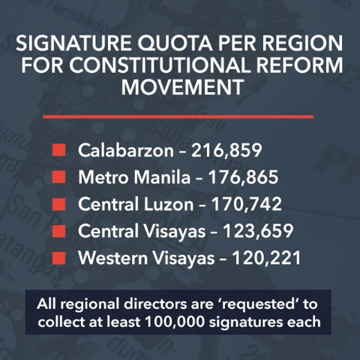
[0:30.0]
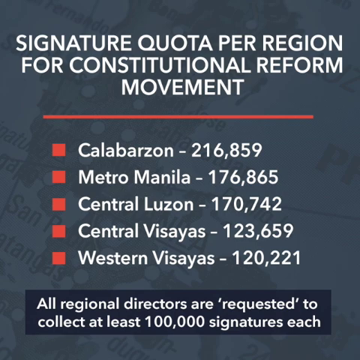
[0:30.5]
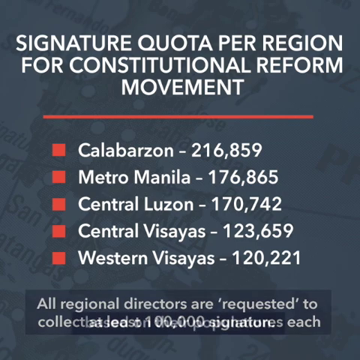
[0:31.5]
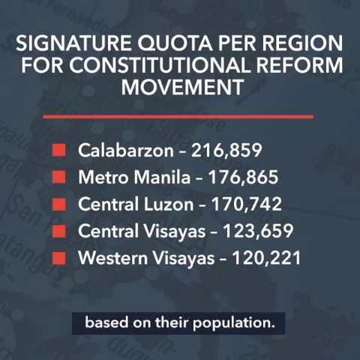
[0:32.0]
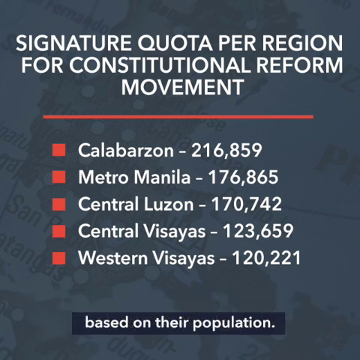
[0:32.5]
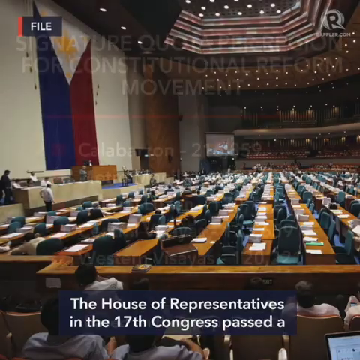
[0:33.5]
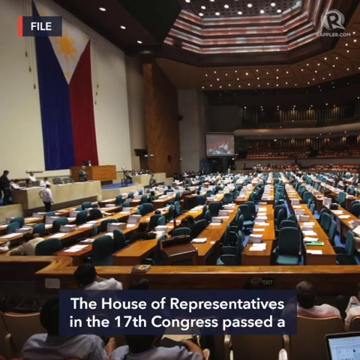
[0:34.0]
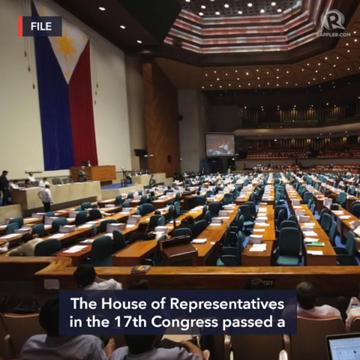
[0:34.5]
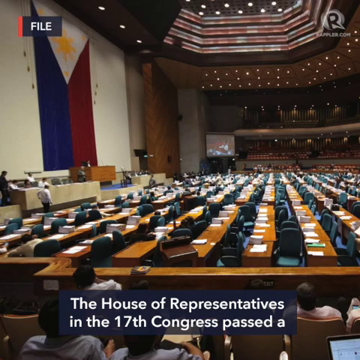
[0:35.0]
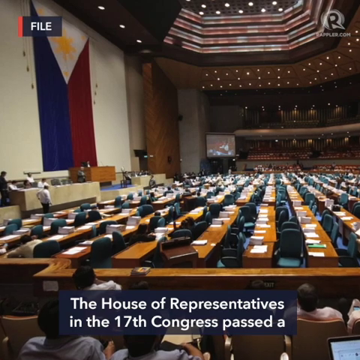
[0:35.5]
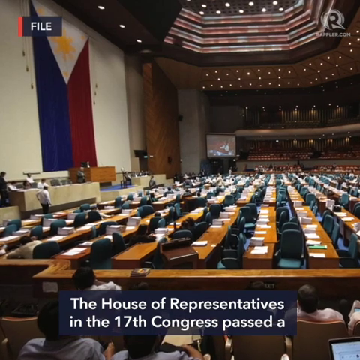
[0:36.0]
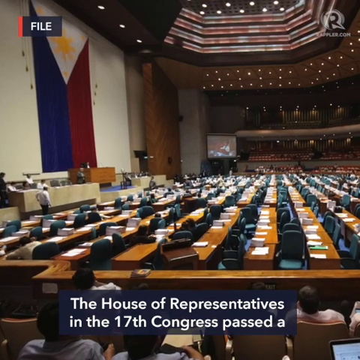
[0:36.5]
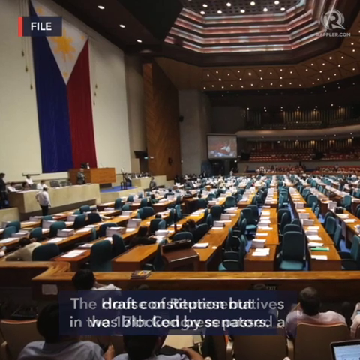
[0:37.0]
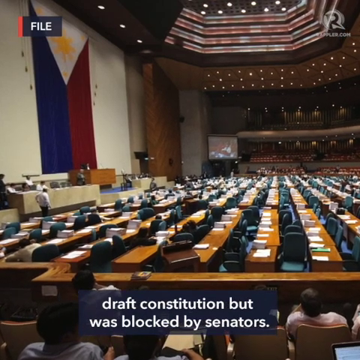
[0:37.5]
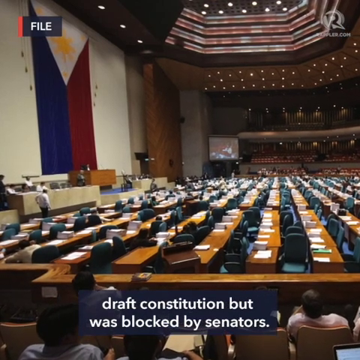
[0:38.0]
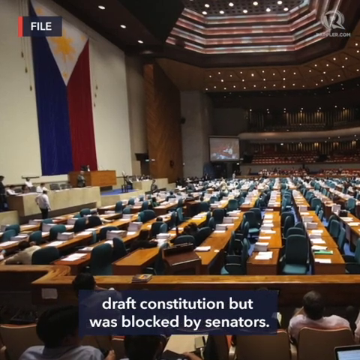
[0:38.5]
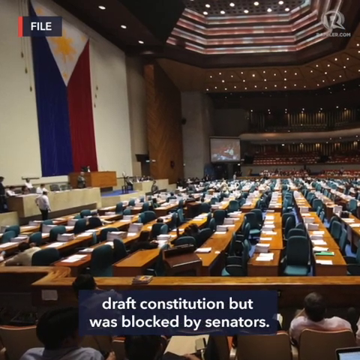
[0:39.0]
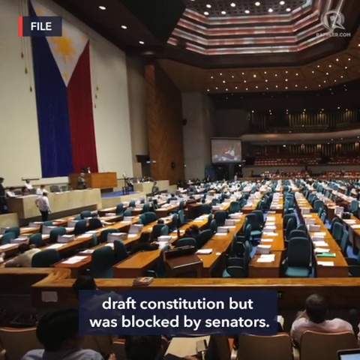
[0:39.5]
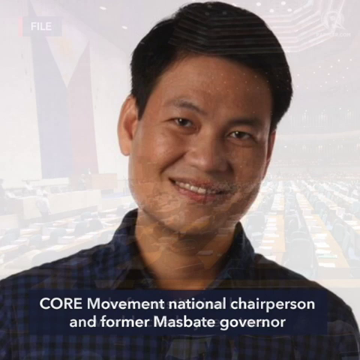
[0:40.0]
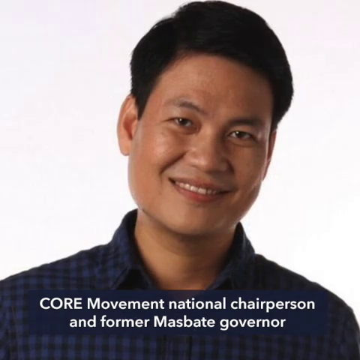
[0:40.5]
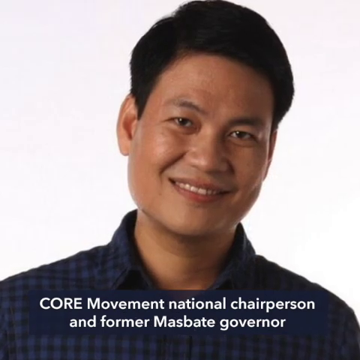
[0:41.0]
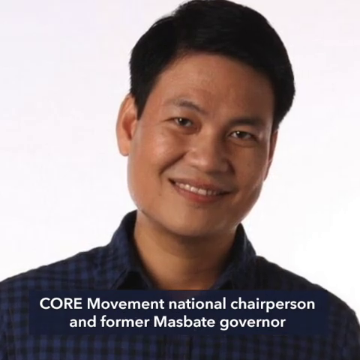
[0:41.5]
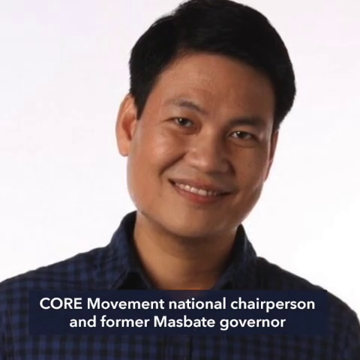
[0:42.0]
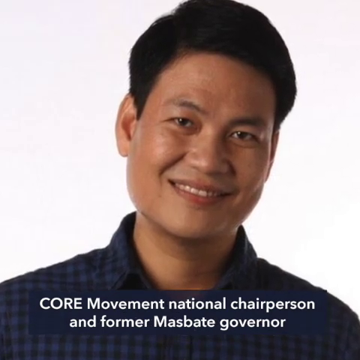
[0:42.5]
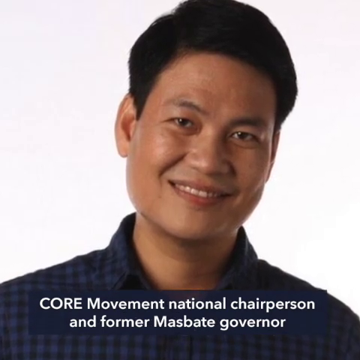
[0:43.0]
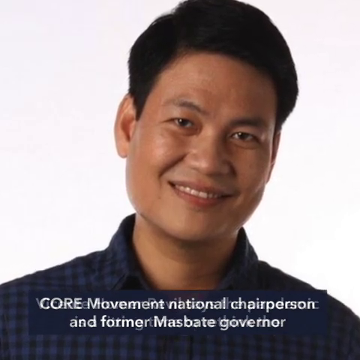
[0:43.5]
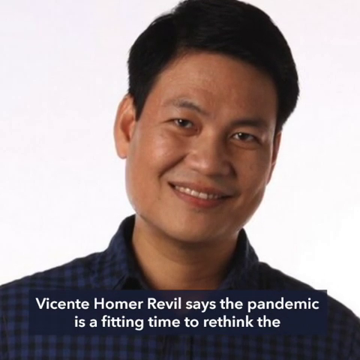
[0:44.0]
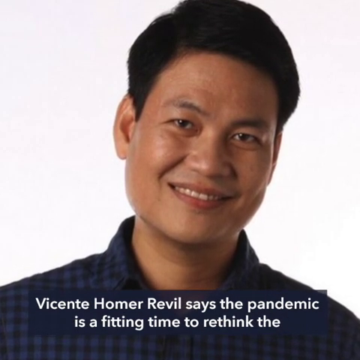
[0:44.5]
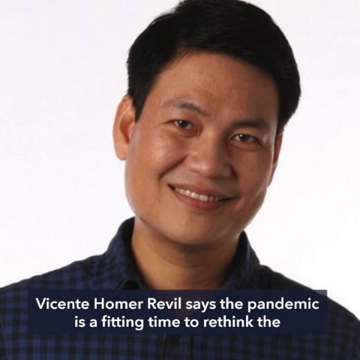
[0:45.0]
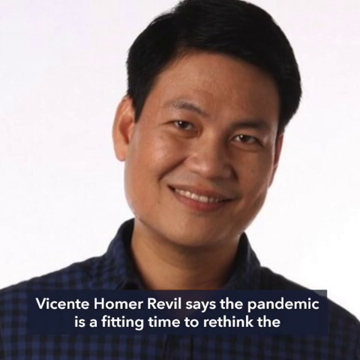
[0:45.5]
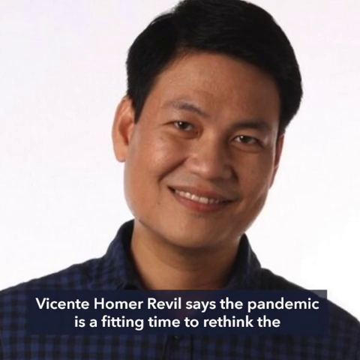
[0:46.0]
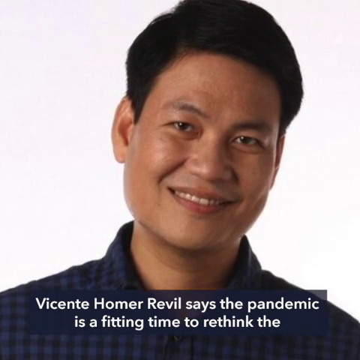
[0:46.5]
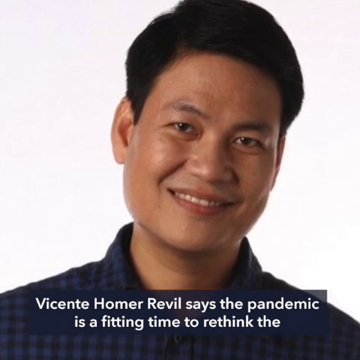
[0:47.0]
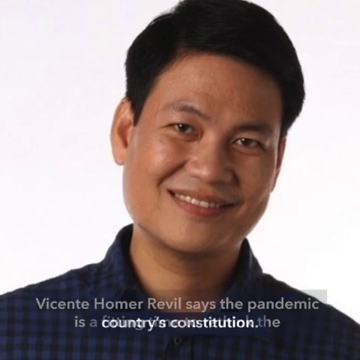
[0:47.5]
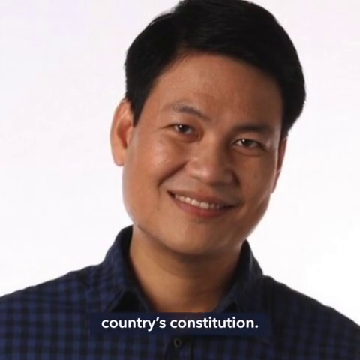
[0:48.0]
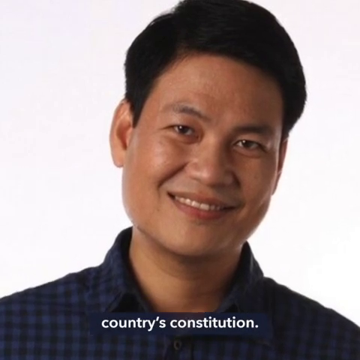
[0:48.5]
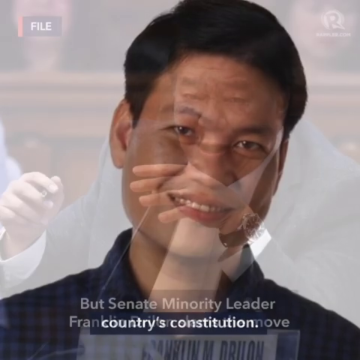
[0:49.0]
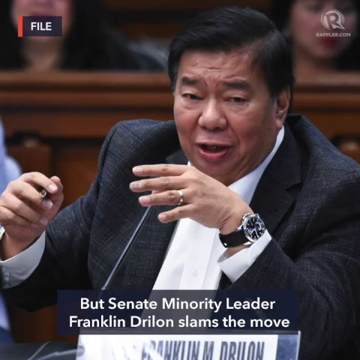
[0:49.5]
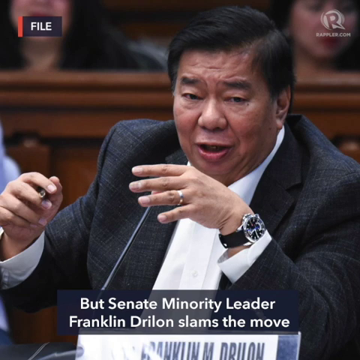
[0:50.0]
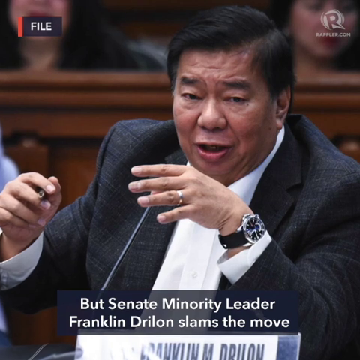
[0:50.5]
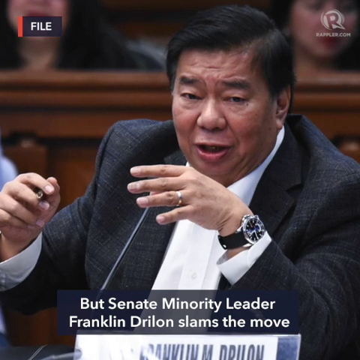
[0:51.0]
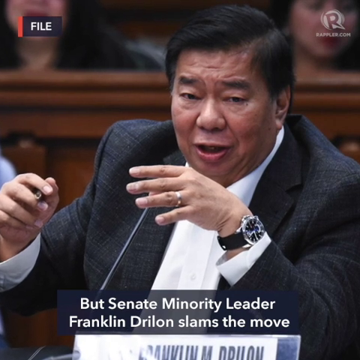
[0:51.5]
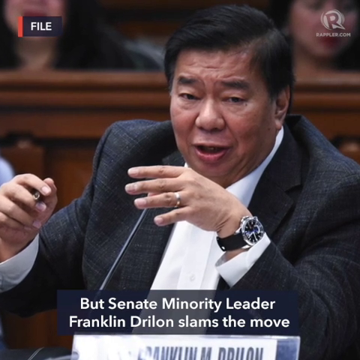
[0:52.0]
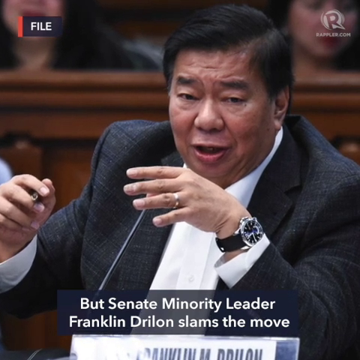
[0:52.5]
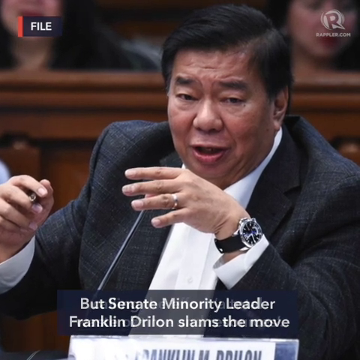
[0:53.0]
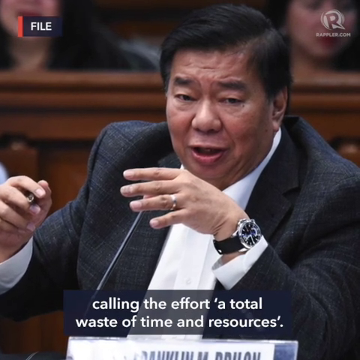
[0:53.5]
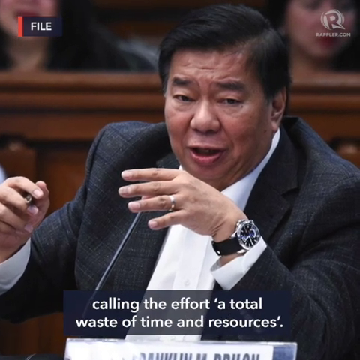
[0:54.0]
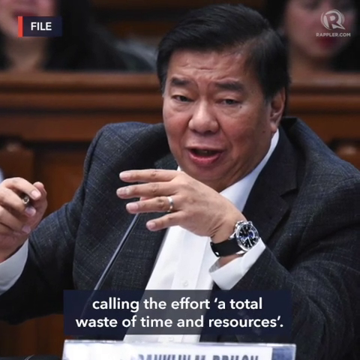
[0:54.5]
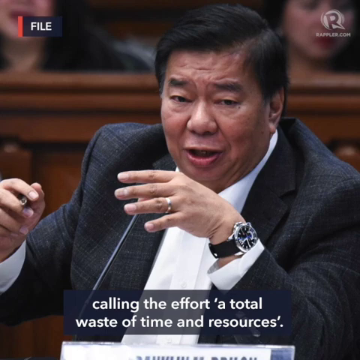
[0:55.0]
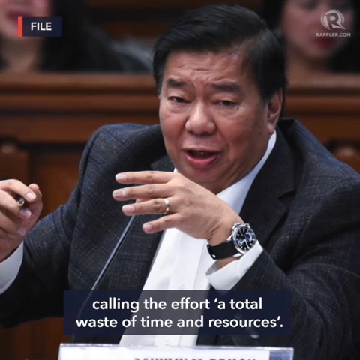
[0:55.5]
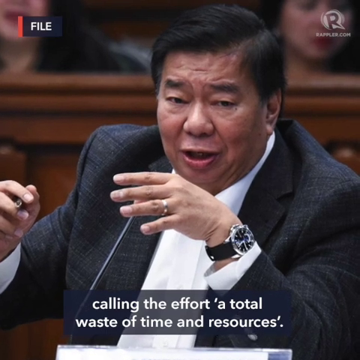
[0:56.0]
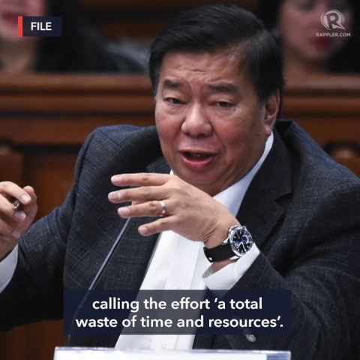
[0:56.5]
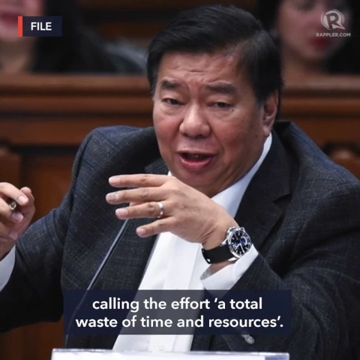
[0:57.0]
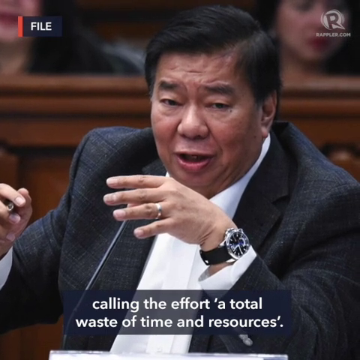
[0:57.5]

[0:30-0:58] A poster with a gray background and white text reads "signature quota per region for constitutional reform movement." A red line follows, then a list with five red boxes, one per line: "Calabar Zone 2016-859," "Metro Manila 176-865," "Central Luzon 170-742," "Central Visayas 123-659," and "Western Visayas 120-221." A text box says "based on their population." The screen then changes to what looks like an assembly hall or legislature, with rows and rows of tables, seats all along them, and white documents on the tables. There is a stage with a large, wide lectern, and in the background of the stage is a large white screen showing a blue and red flag with a white triangle that has the sun in its center.